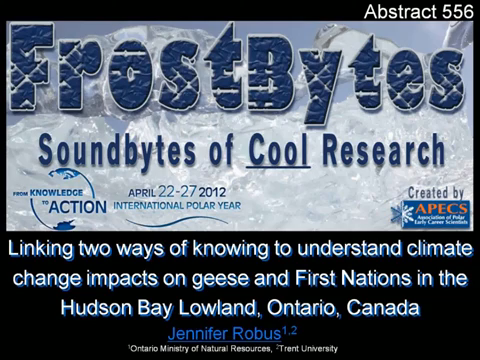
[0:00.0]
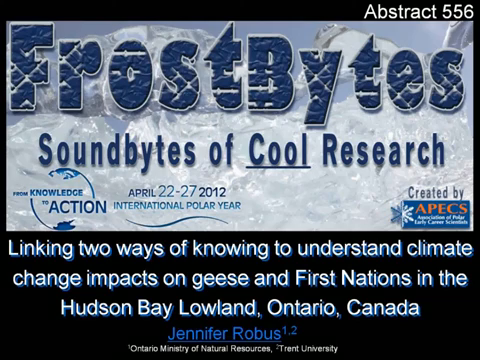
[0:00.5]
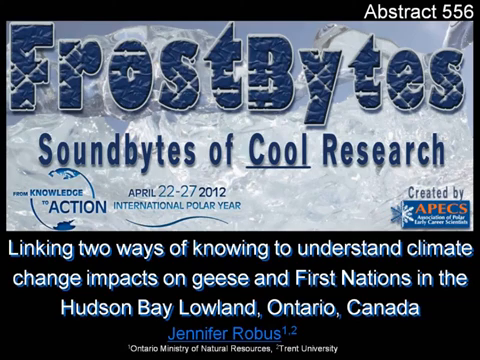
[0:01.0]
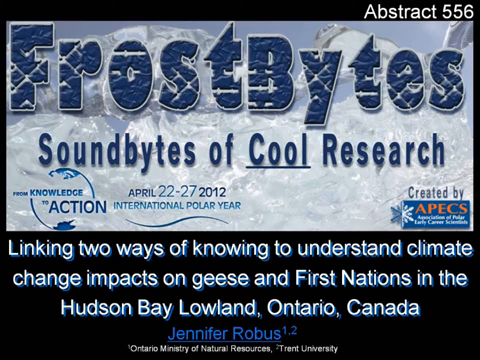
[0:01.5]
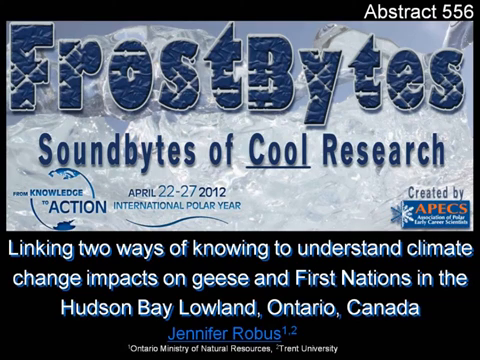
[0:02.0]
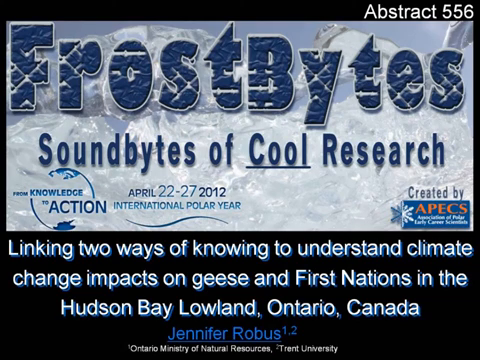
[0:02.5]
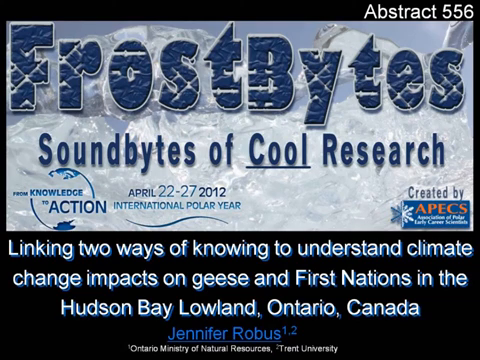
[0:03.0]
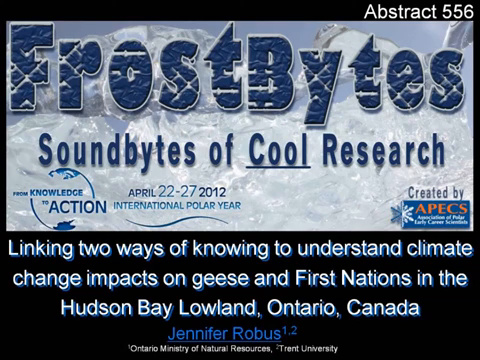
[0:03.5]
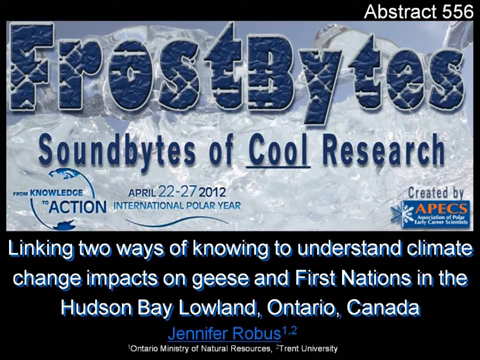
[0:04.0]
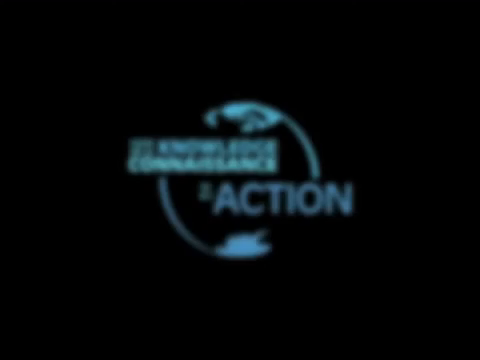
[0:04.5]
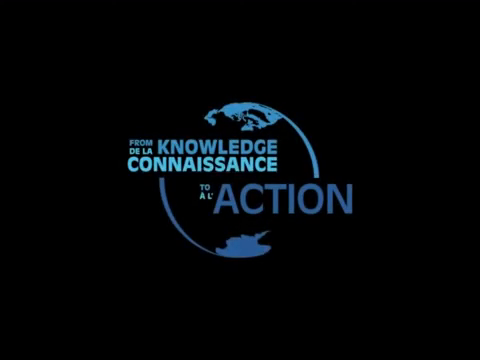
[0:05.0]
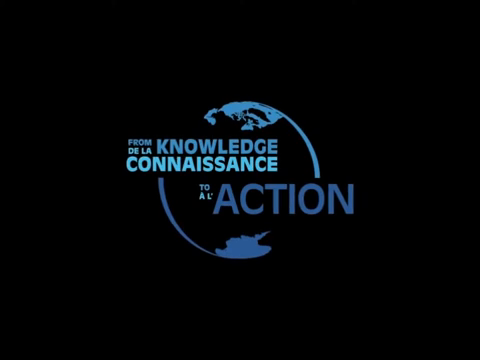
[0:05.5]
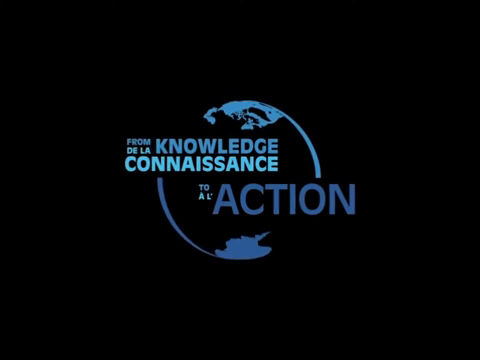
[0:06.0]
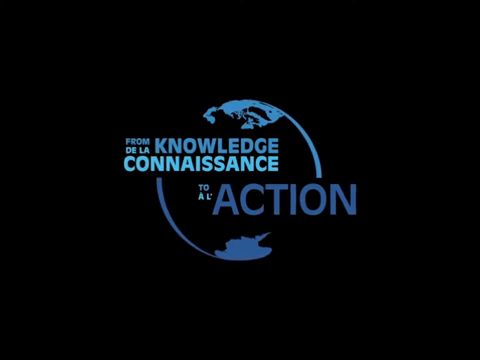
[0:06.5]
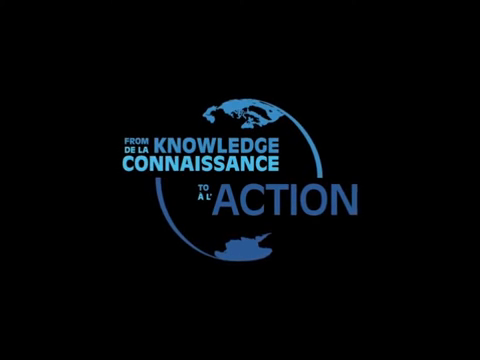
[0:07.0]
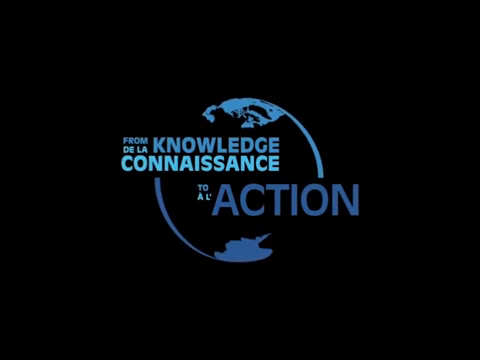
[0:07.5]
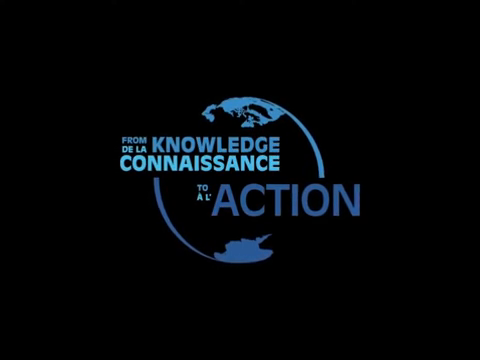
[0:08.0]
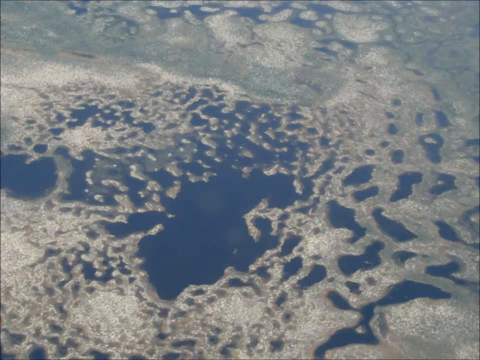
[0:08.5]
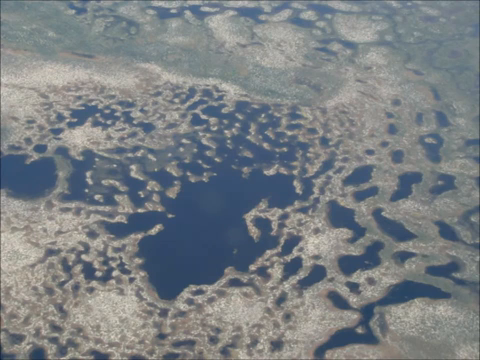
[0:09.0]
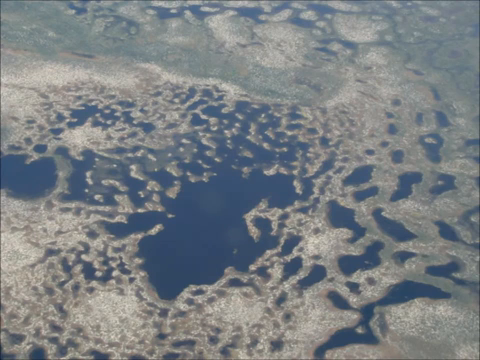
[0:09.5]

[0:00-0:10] The video begins with a screen that says "frostbite, soundbite of cool research." The bottom third of the screen is a black background with white text overlaid on it that begins "linking two ways of knowing to understand climate change impacts on" and continues "First Nations in the Hudson Bay, Lowland, Ontario, Canada." The date on it reads April 22nd to the 27th, 2012. This is sort of an introductory screen, and at the bottom it says it is by Jennifer Robus (R-O-B-U-S) from the Ontario Ministry of Resources. Next, a logo with the name of an organization, which looks to be in French, is superimposed on an abstract illustration of the globe on a black background. Then an aerial shot shows what looks like land covered in small lakes.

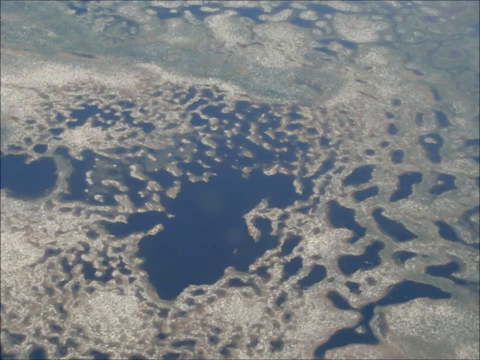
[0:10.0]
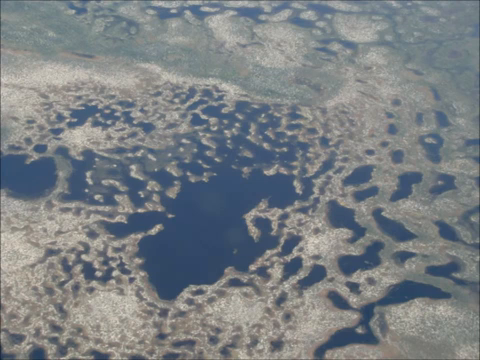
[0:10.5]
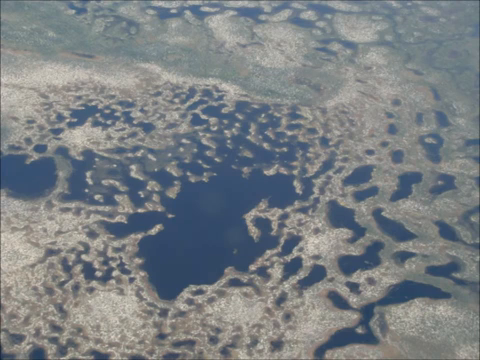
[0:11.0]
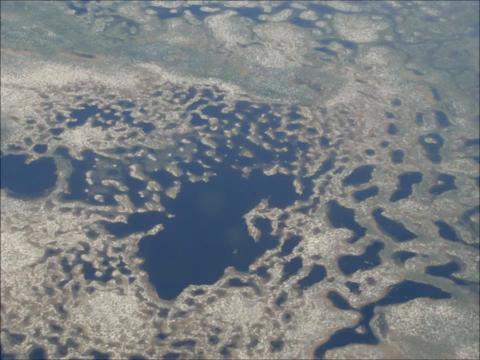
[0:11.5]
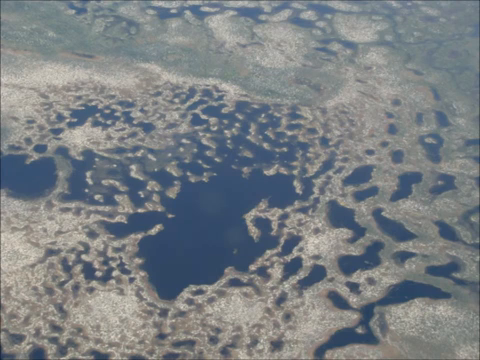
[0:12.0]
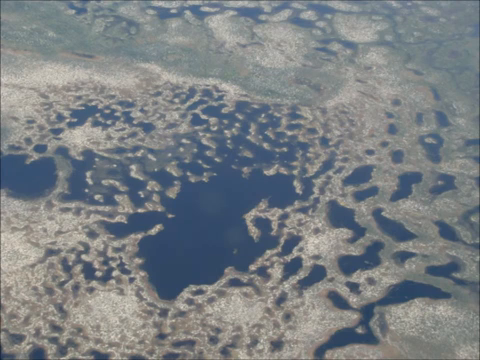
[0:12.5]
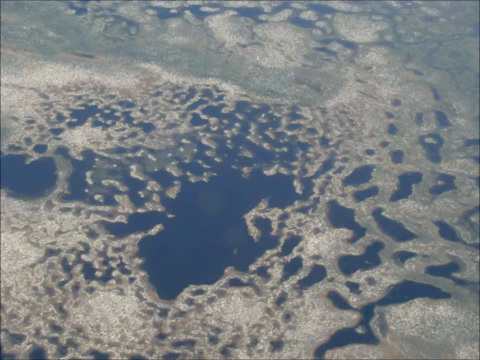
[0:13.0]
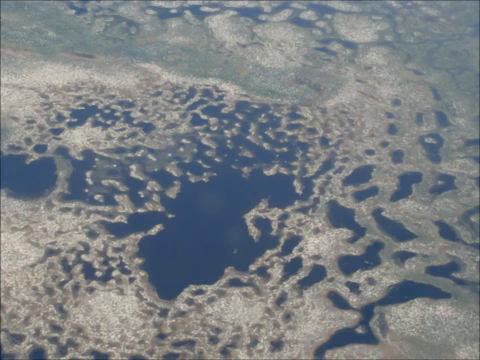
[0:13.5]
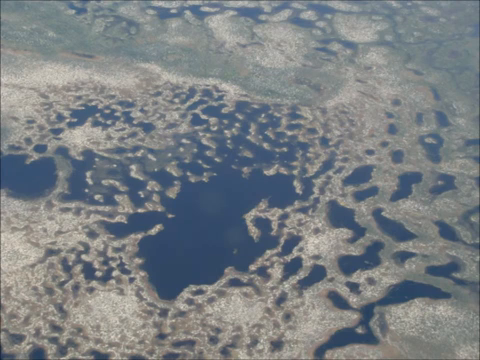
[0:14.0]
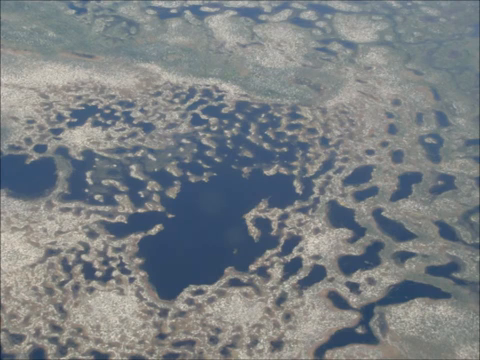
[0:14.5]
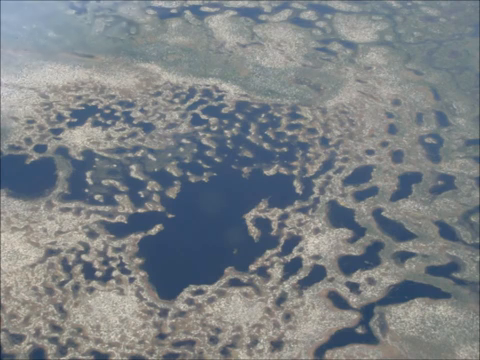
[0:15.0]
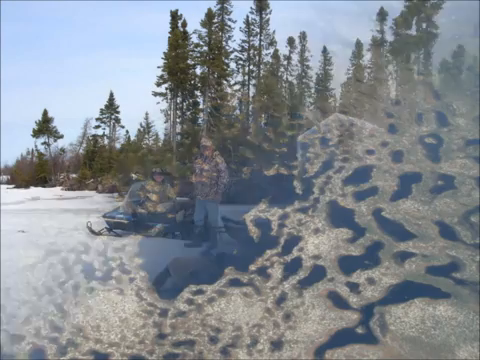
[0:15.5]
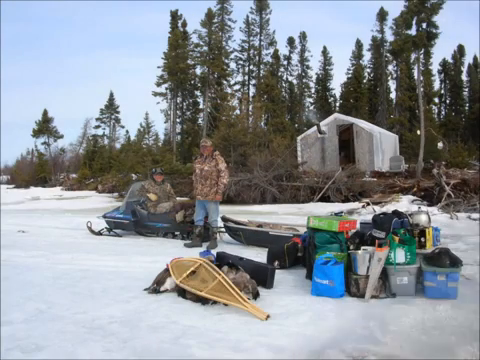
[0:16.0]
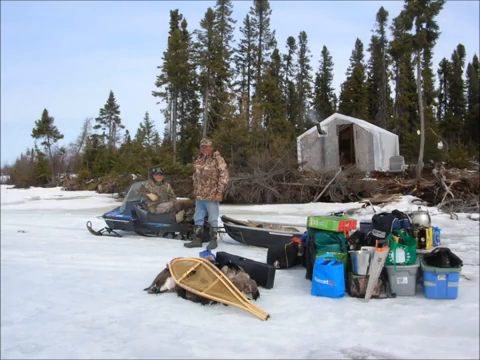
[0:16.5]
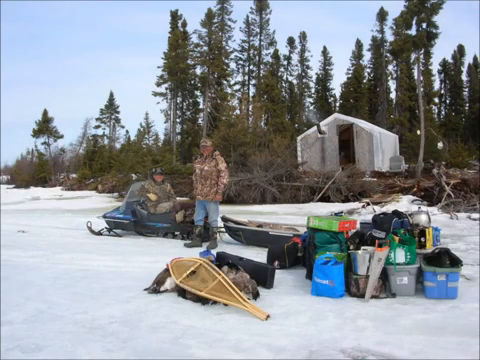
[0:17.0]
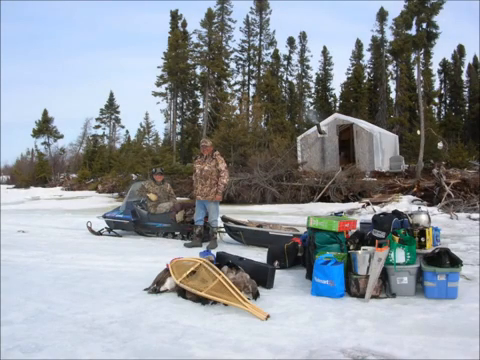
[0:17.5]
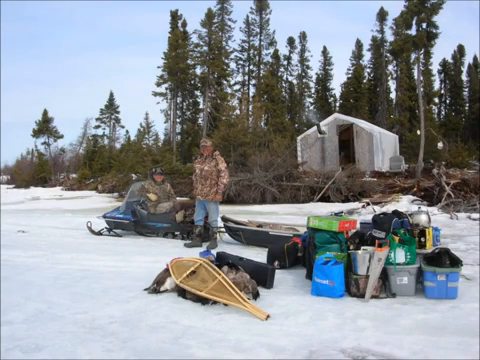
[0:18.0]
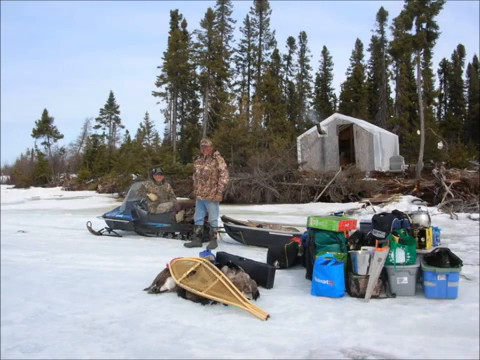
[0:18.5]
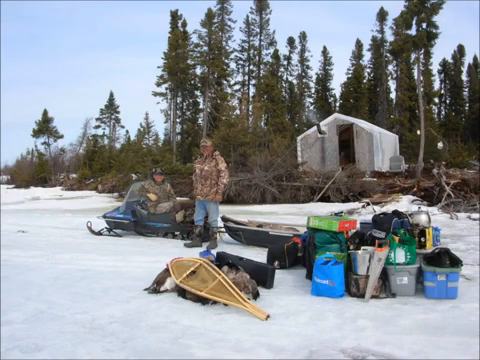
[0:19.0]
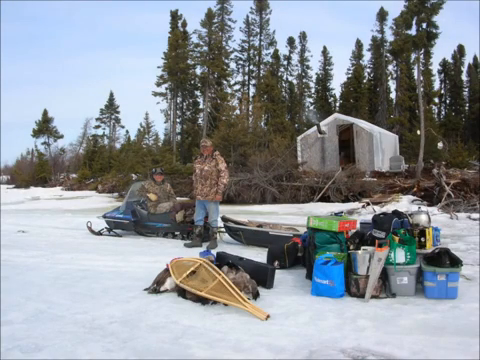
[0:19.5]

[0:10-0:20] The landscape looks to be icy or snowy, with puddles of ice water splattered all over it. Nothing is moving, so it looks to be a still photograph, and it is difficult to tell how high up the view is. Next comes a photograph of two people: one is sitting on a snowmobile and the other is standing next to it. There is snow all over the ground. They are wearing boots, jeans and camouflage jackets. On the bank behind them is a white tent.